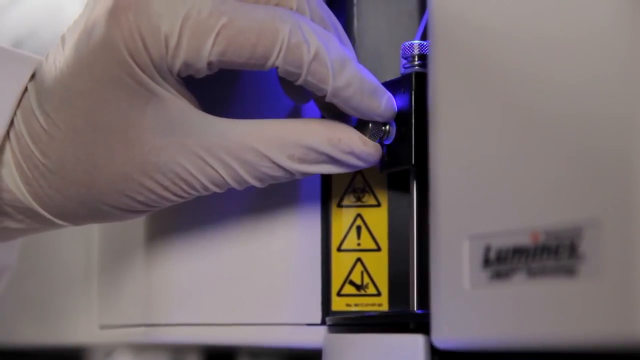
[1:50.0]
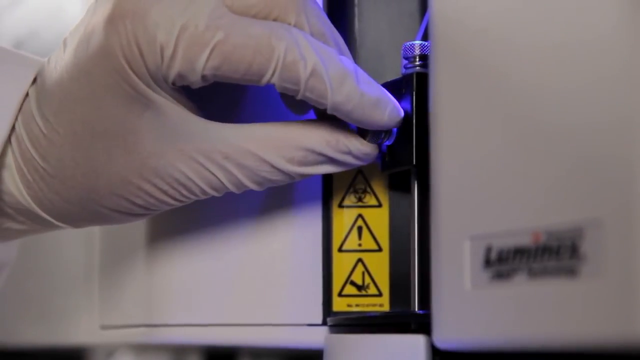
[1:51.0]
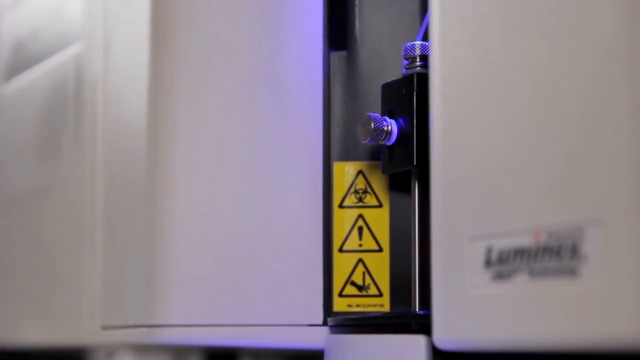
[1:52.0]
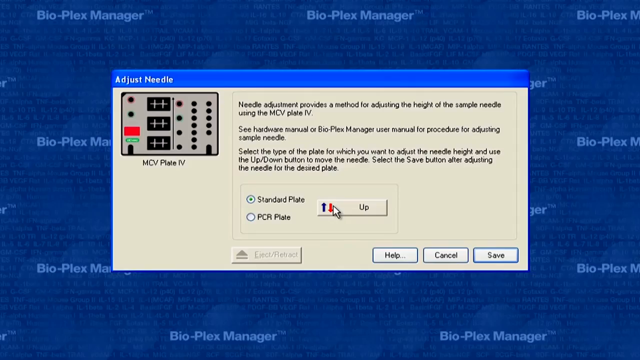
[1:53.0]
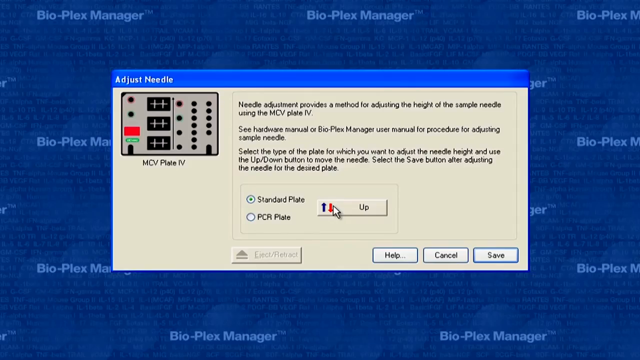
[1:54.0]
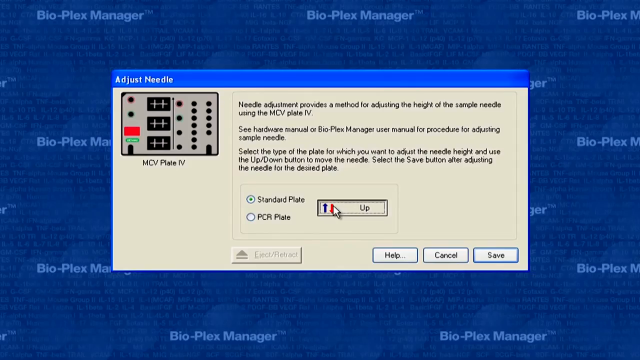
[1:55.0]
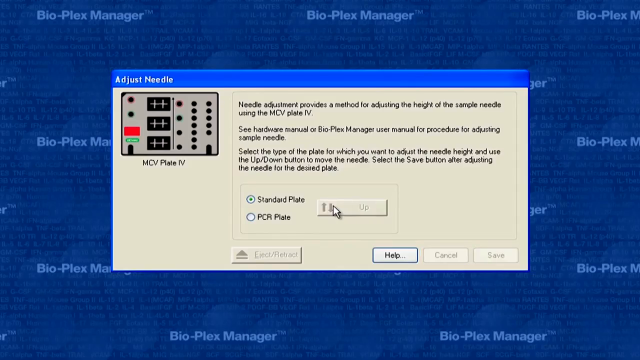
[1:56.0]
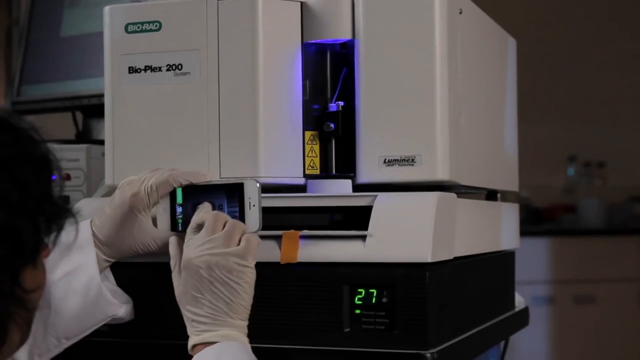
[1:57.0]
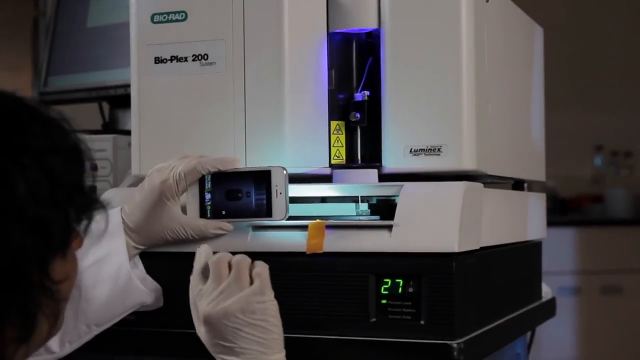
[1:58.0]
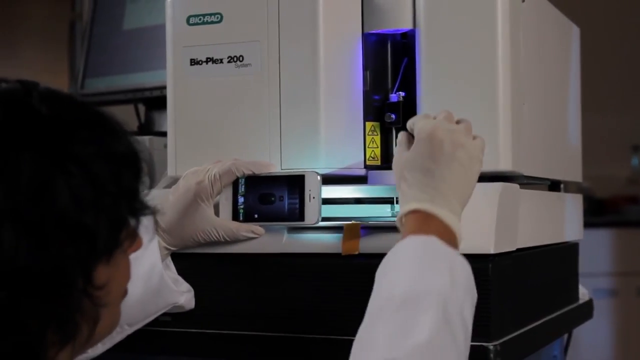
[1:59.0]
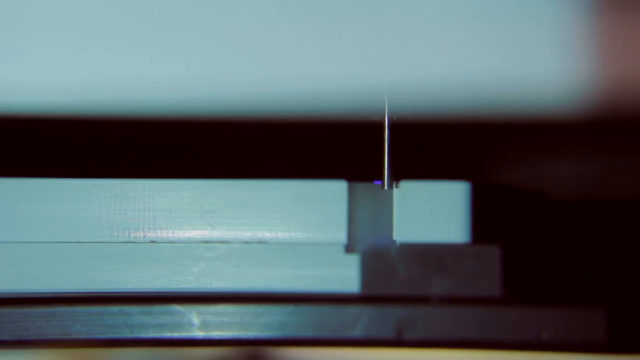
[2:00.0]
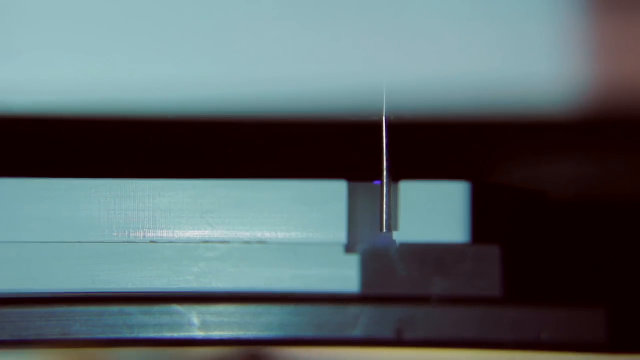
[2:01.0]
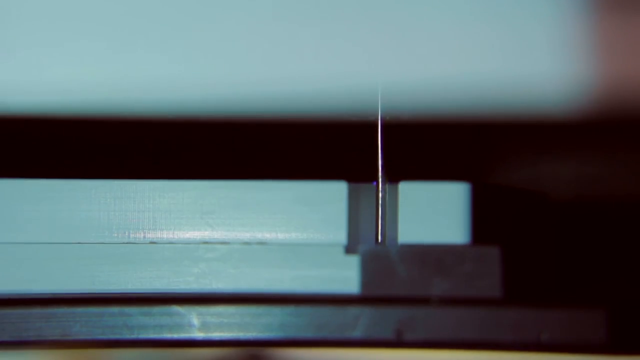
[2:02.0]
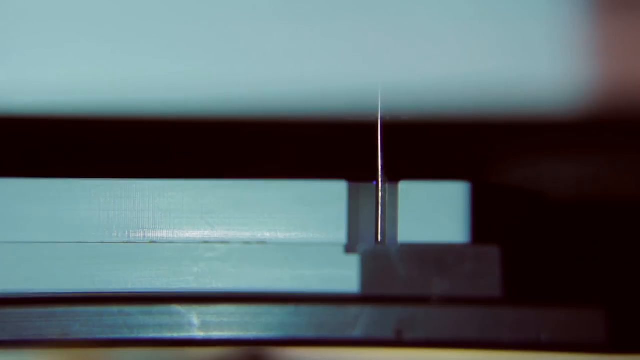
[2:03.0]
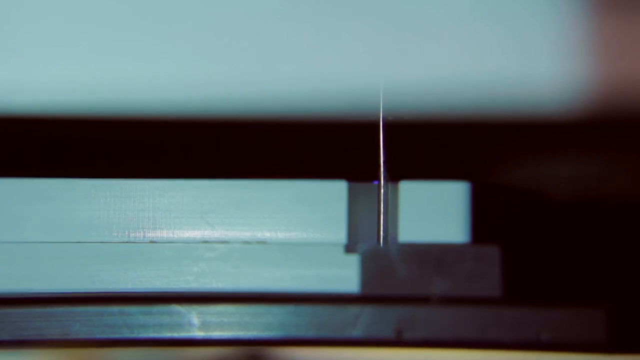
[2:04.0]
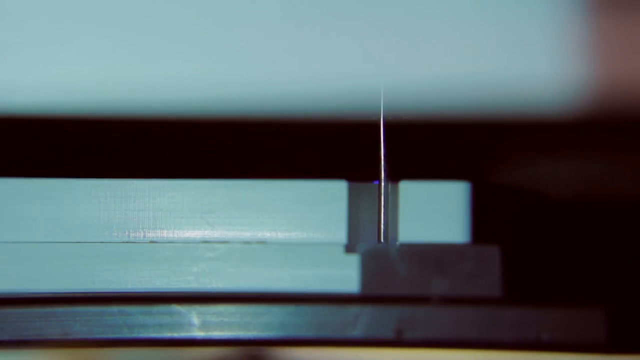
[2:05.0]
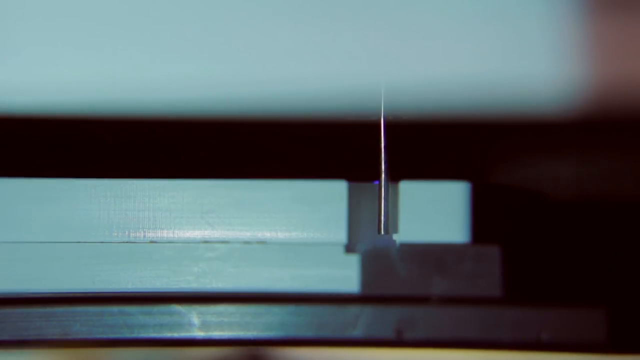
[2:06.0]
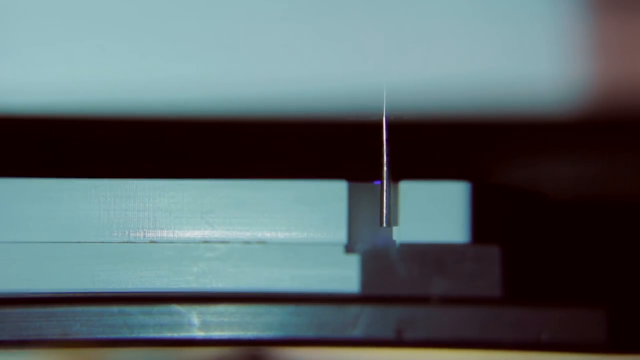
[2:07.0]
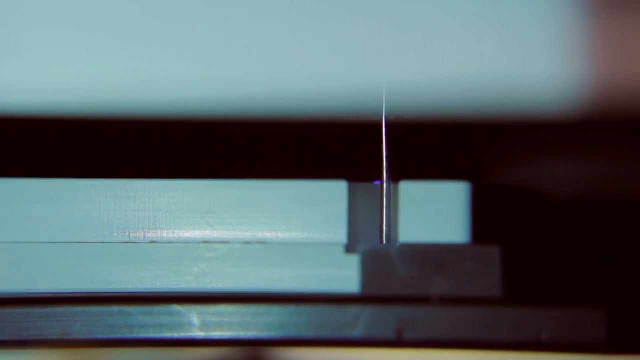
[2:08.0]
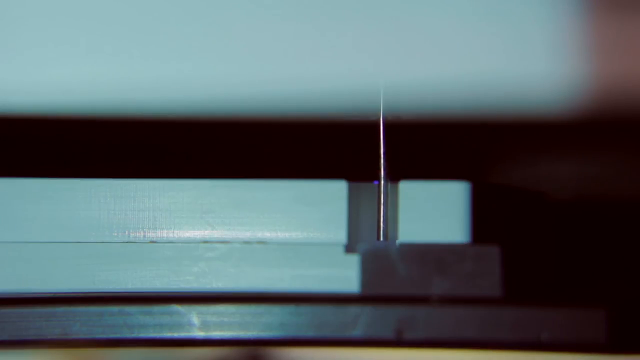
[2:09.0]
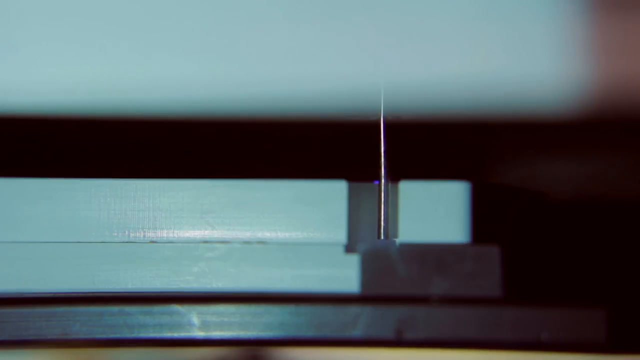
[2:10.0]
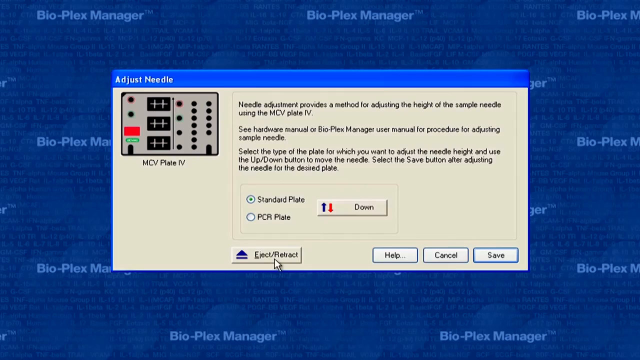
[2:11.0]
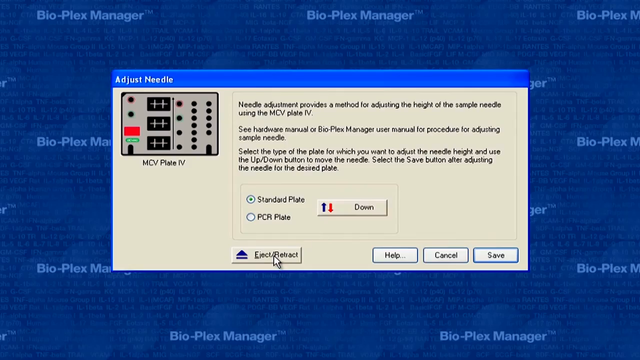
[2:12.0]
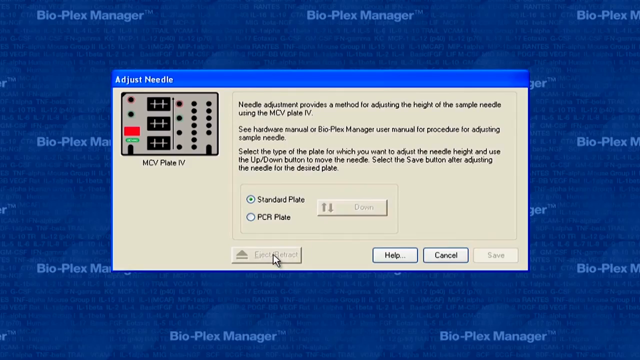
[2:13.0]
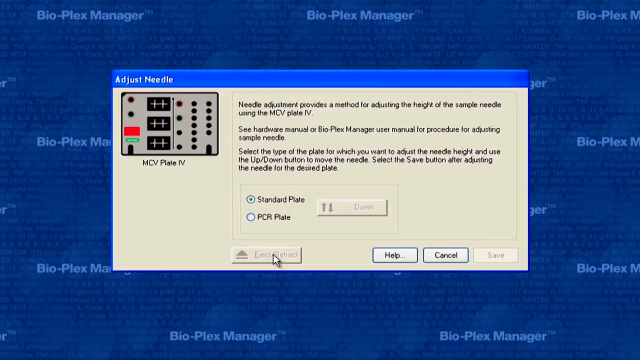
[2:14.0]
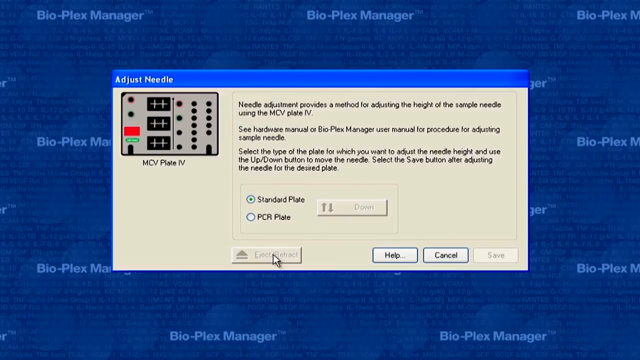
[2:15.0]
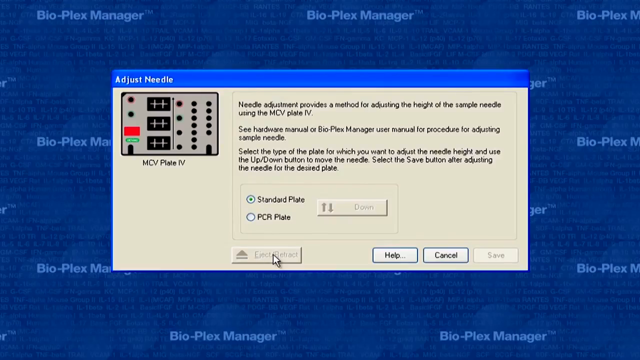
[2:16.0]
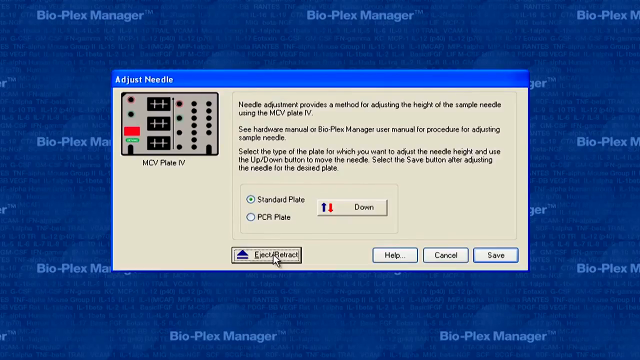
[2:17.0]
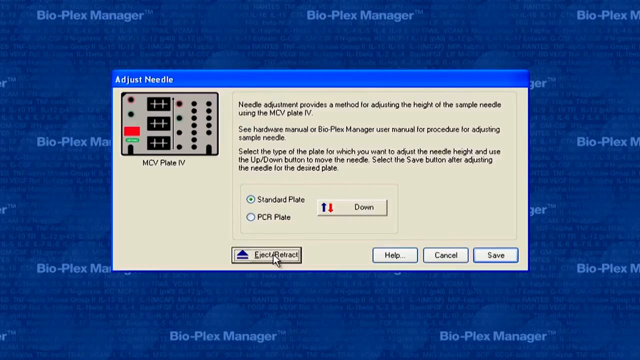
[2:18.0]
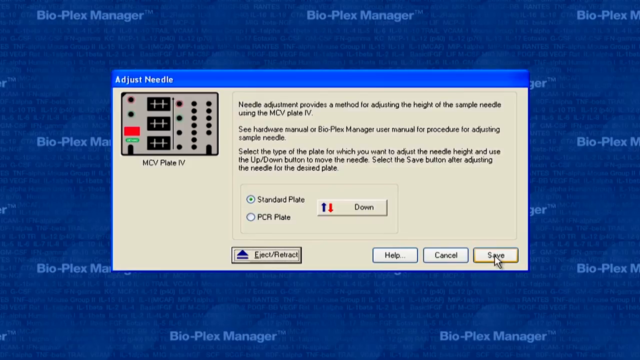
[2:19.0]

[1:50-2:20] The gloved hand of a lab person holds the metallic button or piece on the front of a white machine. In the lower right corner of the machine is the word "Luminex" in black text. Beneath the gloved hand is a yellow hazard strip with three triangles arranged vertically, showing a biohazard symbol, an exclamation mark and a symbol of a hand being stabbed. The lab person turns the metallic piece clockwise with the pointer finger and thumb, then pulls the hand back leftward out of view. The video switches to the computer program screen, where the cursor hovers over a button on the "Adjust Needle" pop-up labelled "Up" in black text, with a blue up arrow and a red down arrow to the left of the text. The cursor clicks the button. The video switches to the lab and pans slowly left and down as the lab person presses a finger on the front of their phone with the right hand while holding the phone with its light on in the left hand. The lab person then brings the hand to the right and up, reaching toward the front of the white Bio-Plex 200 machine. The video switches to the needle, which retracts up a little from its previous position, descends, retracts up very slowly, and then descends a little in a single thrust. The video switches back to the screen with the pop-up. The cursor moves down and to the left to the button labelled "Eject/Retract" and clicks it. After a few moments, the cursor moves to hover over a button in the lower right corner of the pop-up labelled "Save," and clicks it, and the pop-up vanishes. The video switches to the man in the lab facing the camera.